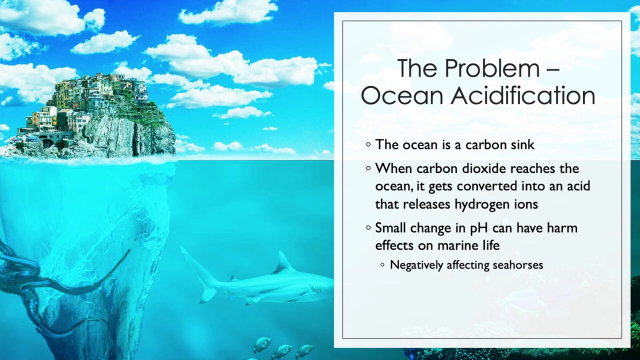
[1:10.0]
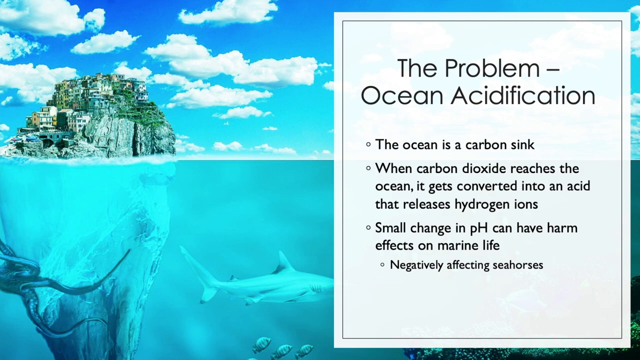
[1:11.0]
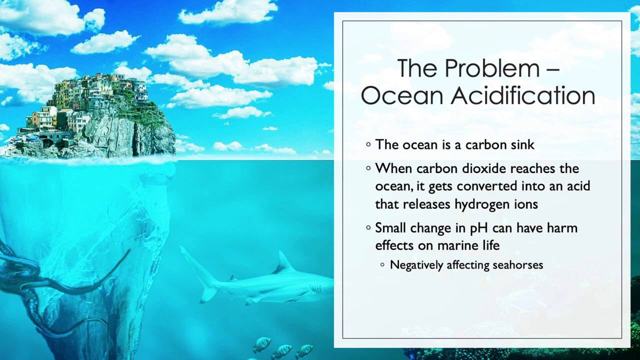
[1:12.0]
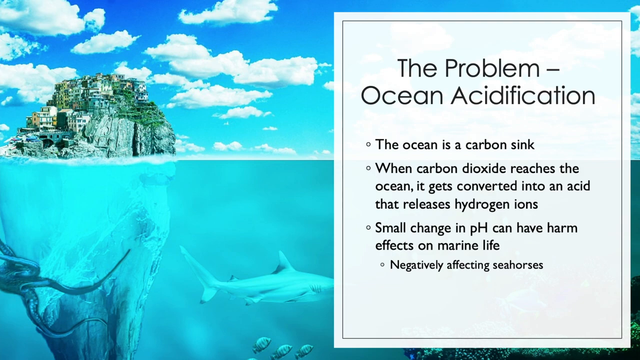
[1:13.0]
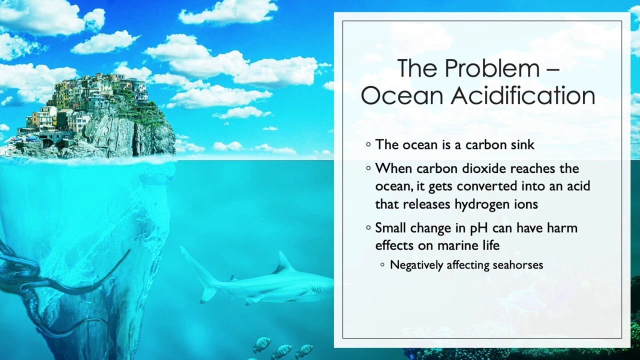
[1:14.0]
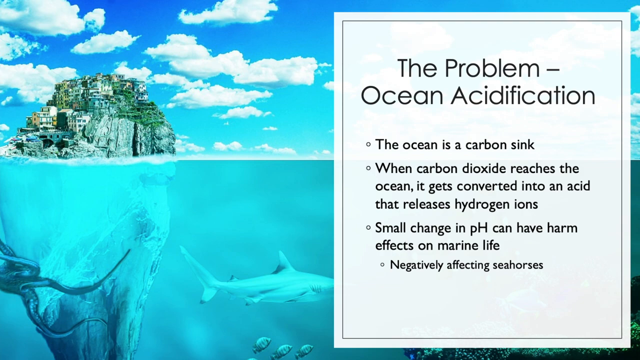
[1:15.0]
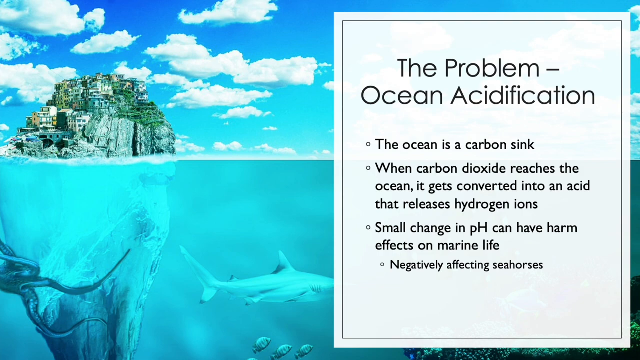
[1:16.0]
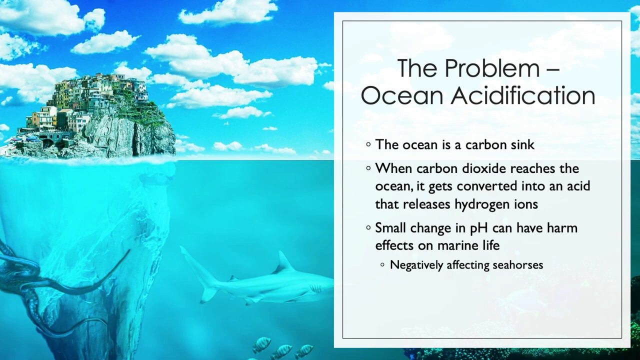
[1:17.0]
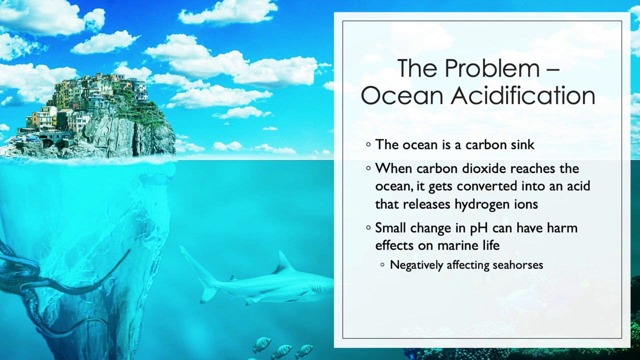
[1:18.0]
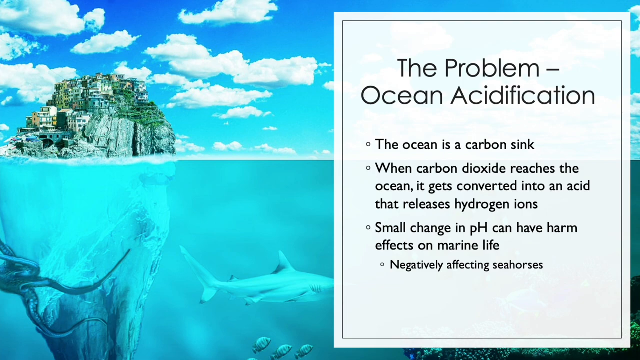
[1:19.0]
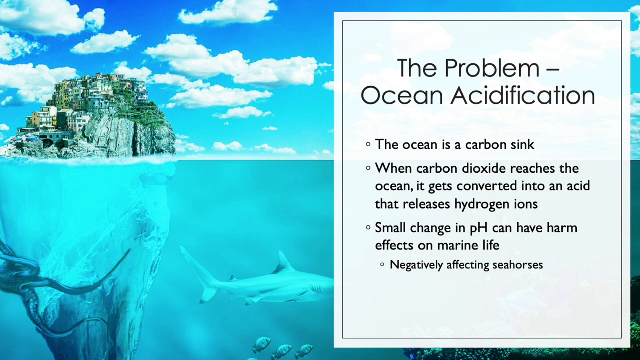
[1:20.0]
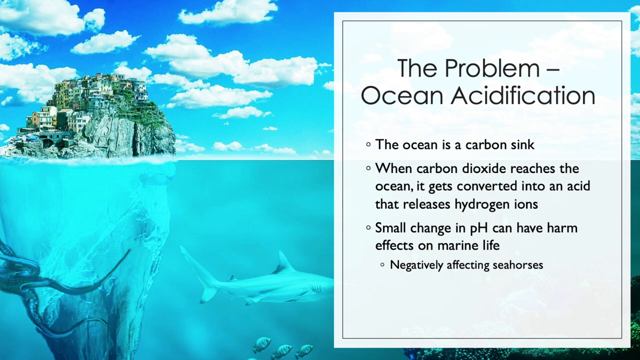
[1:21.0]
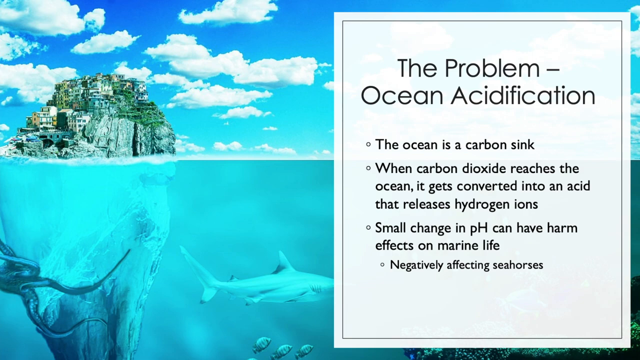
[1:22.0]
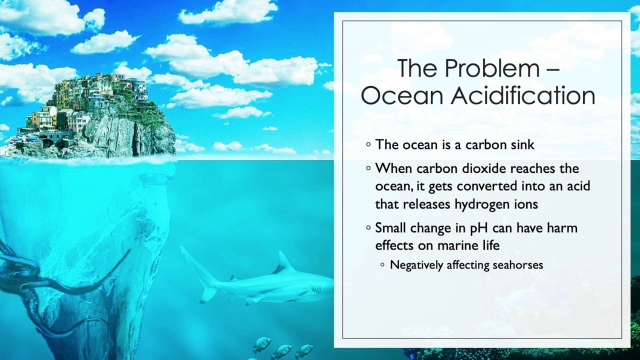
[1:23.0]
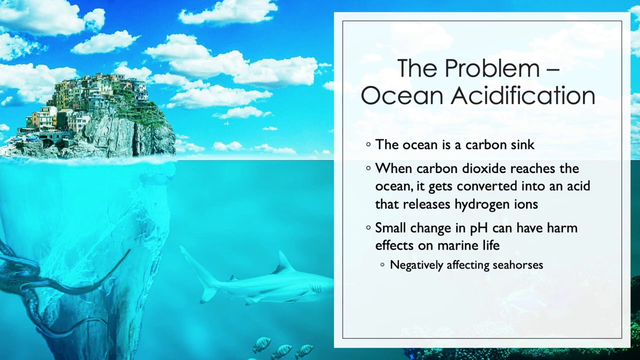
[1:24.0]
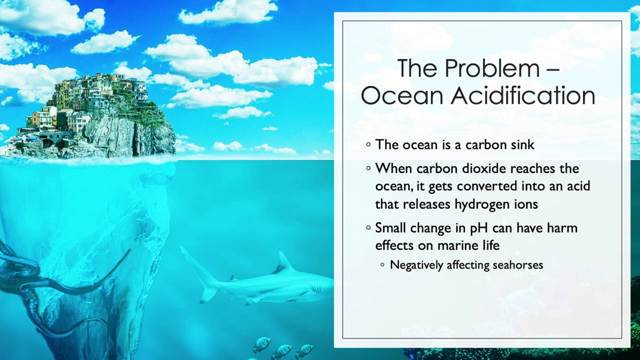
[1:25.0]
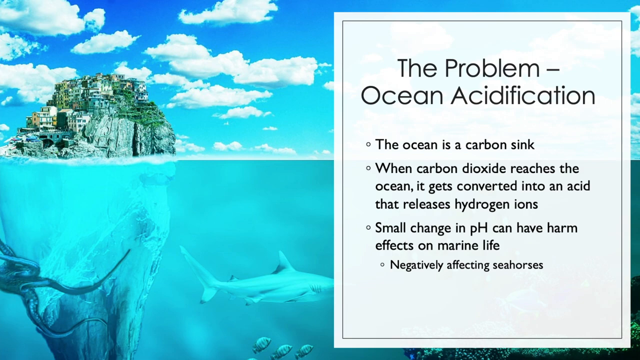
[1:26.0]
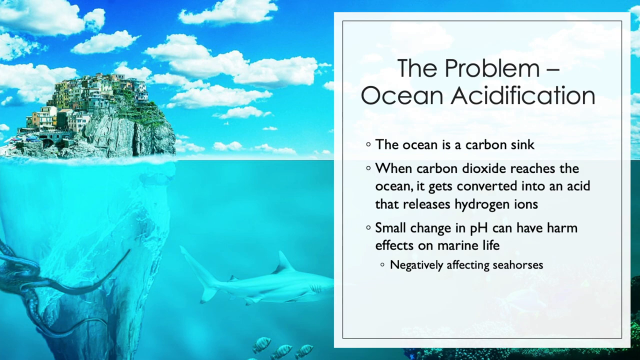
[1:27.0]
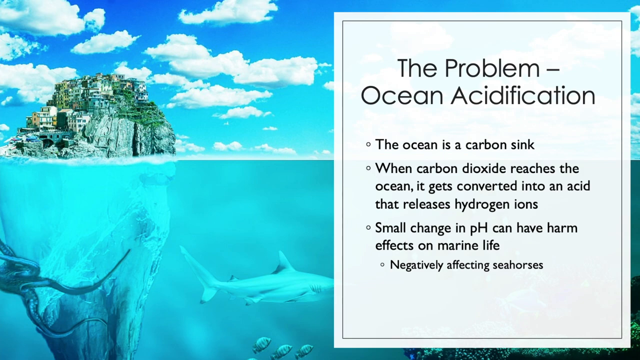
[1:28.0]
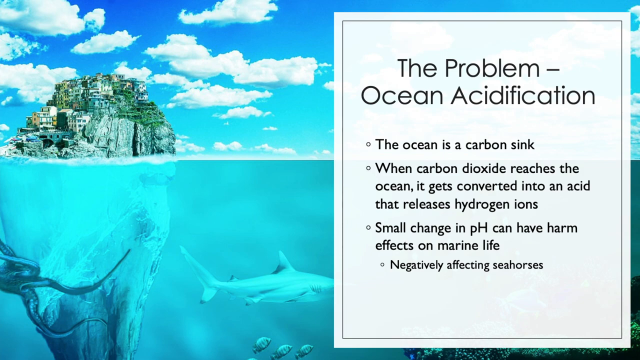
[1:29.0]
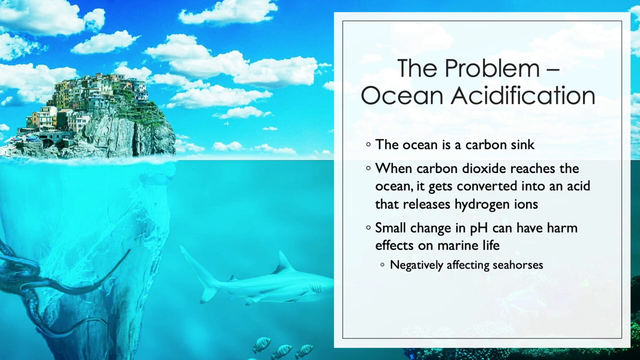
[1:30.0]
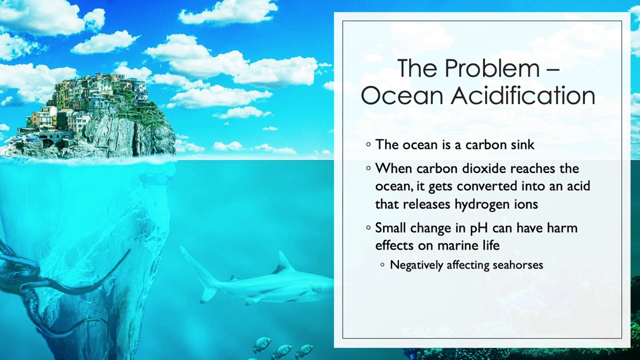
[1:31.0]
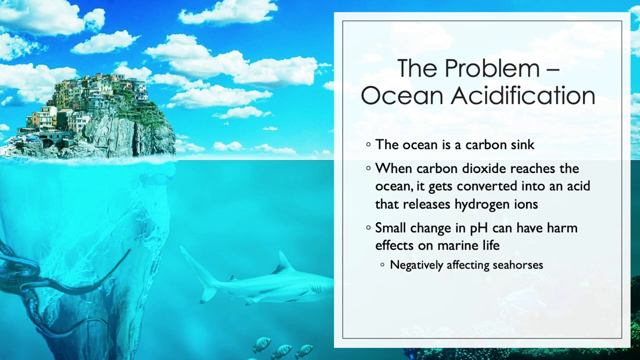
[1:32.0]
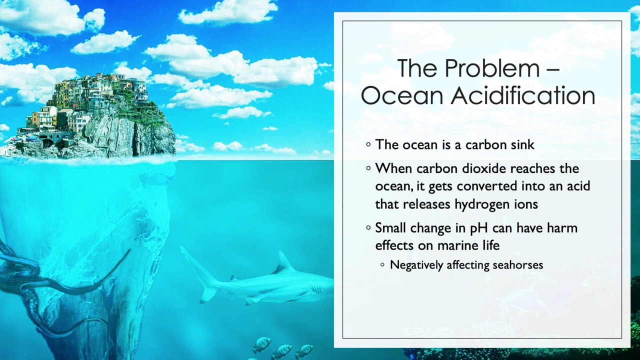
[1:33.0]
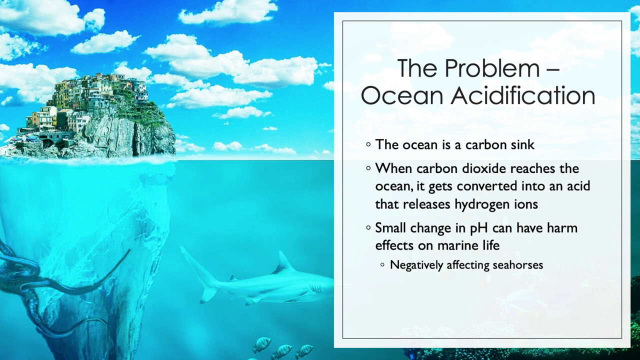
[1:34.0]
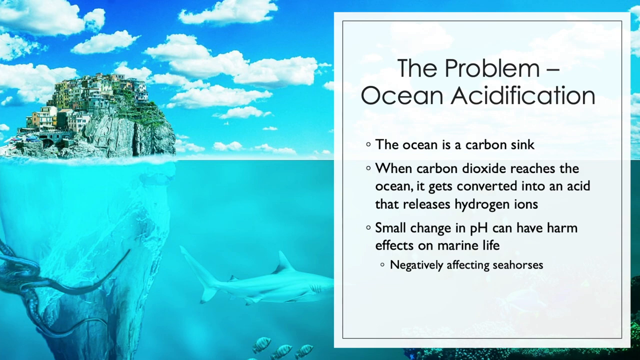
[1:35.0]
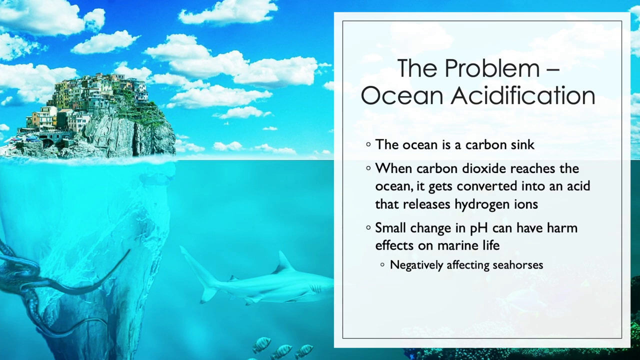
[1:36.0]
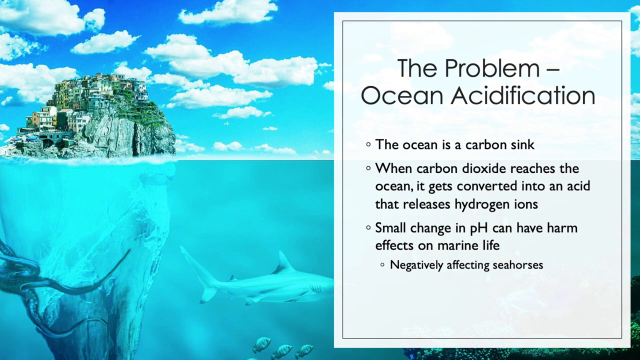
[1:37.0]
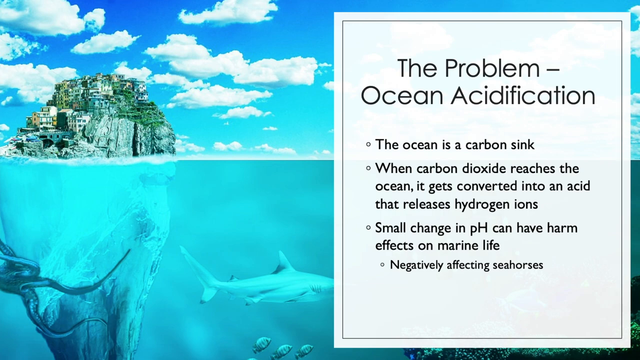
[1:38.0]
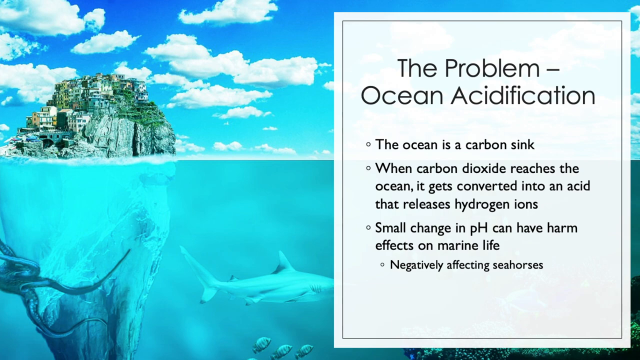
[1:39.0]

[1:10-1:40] The slide has a white box with text over a background image, with most of the image on the left. The image shows turquoise water with what seems to be a rock-type island and a blue sky that is light blue near the ocean and gets darker toward the top. About six or seven white clouds of varying shapes and sizes are in the sky. The white box contains the text "the problem, ocean acidification" in all caps.